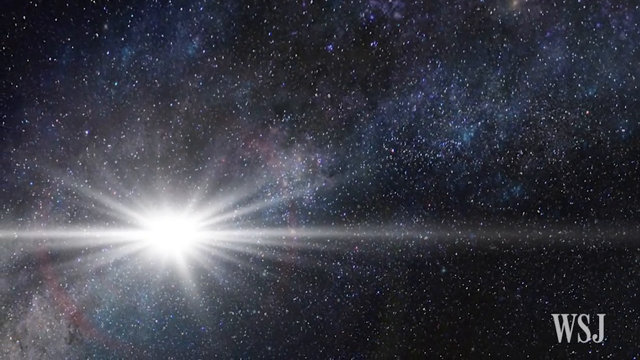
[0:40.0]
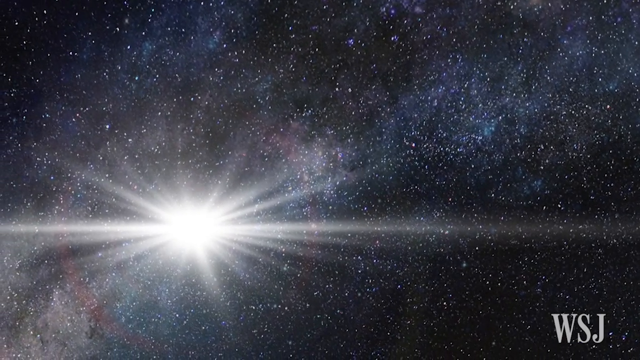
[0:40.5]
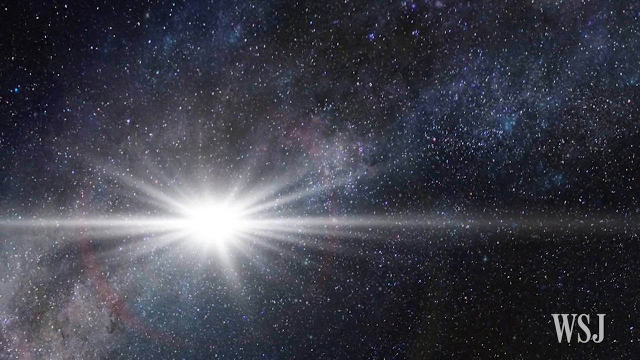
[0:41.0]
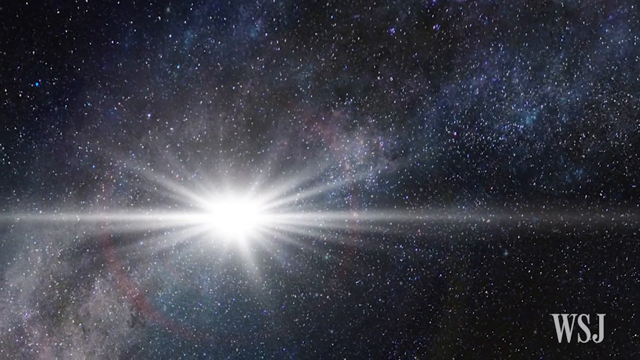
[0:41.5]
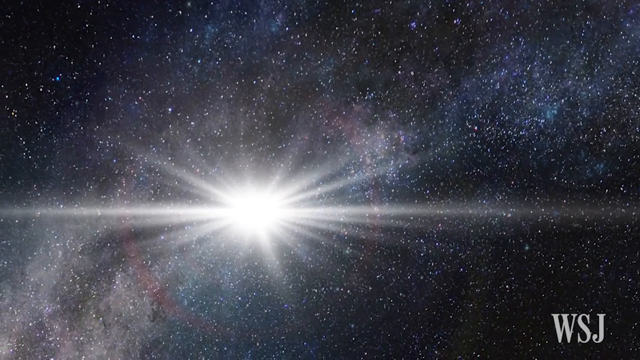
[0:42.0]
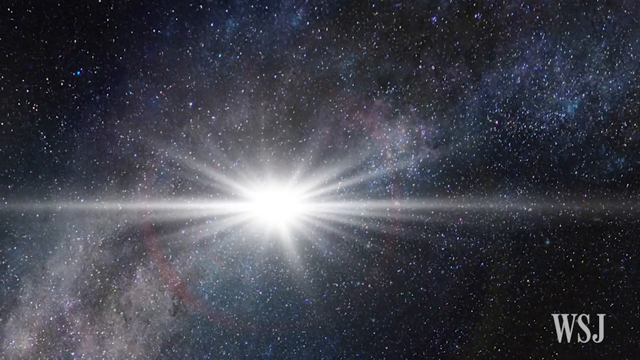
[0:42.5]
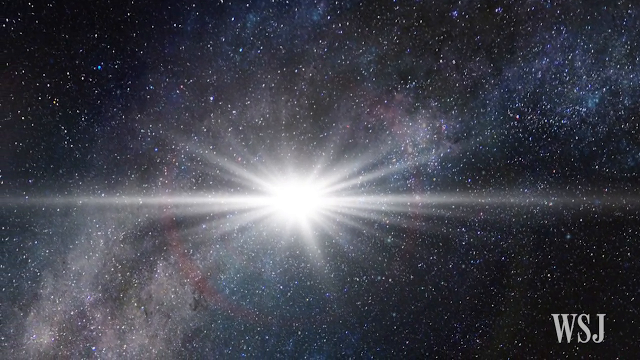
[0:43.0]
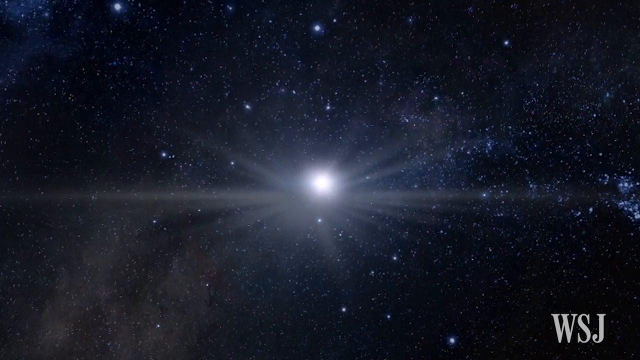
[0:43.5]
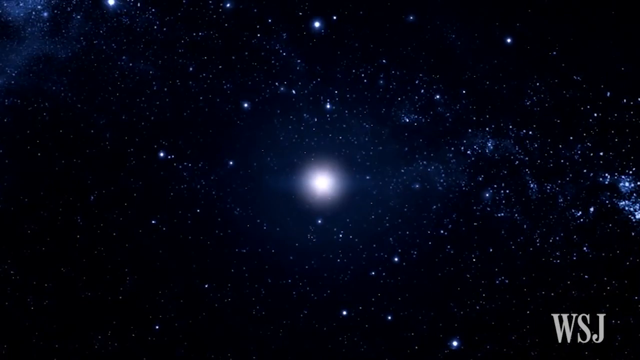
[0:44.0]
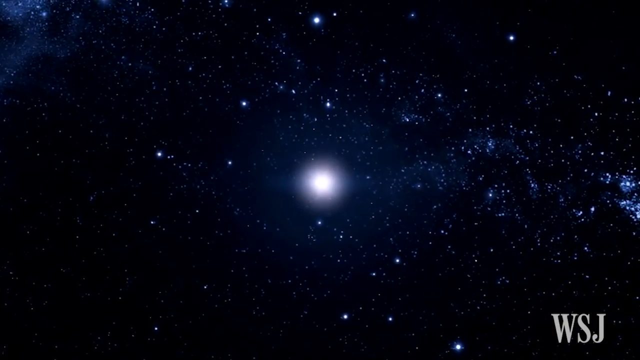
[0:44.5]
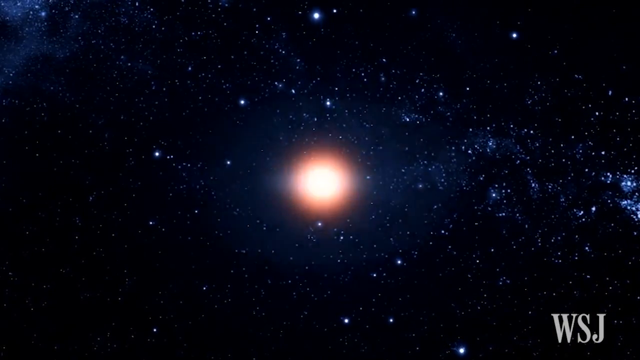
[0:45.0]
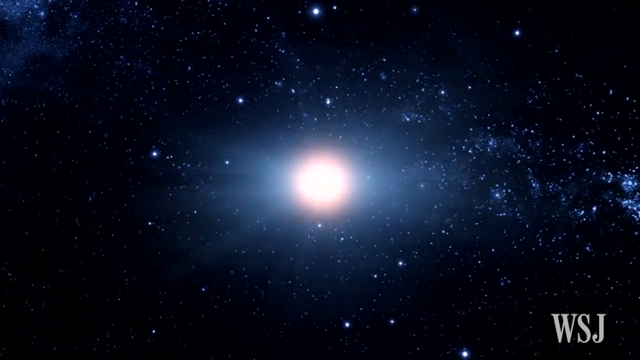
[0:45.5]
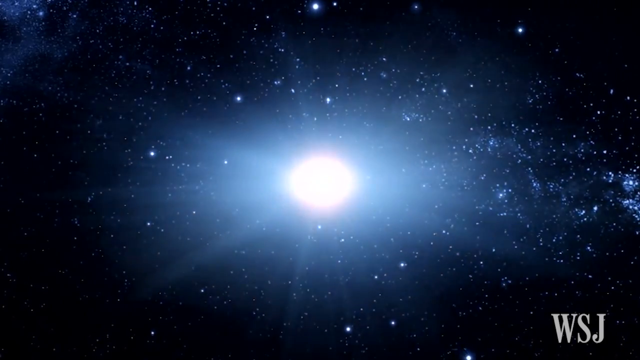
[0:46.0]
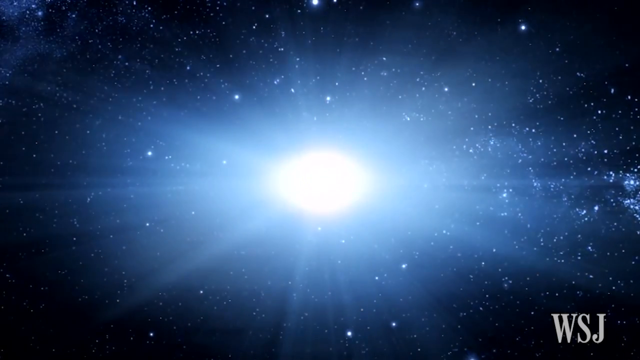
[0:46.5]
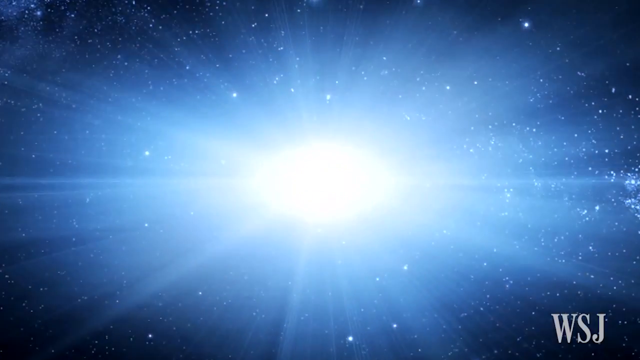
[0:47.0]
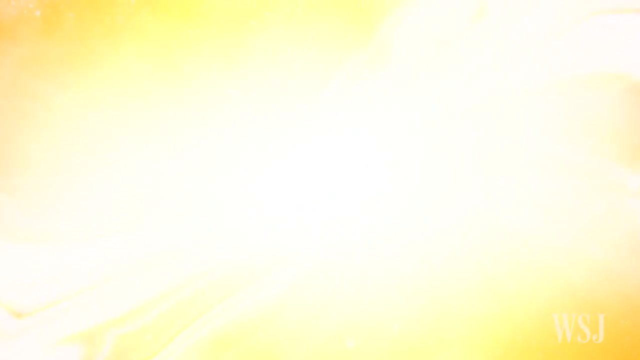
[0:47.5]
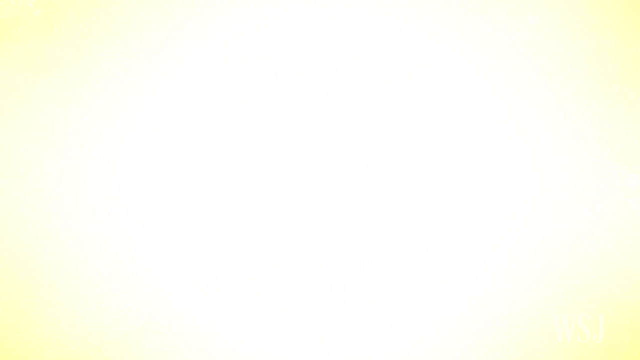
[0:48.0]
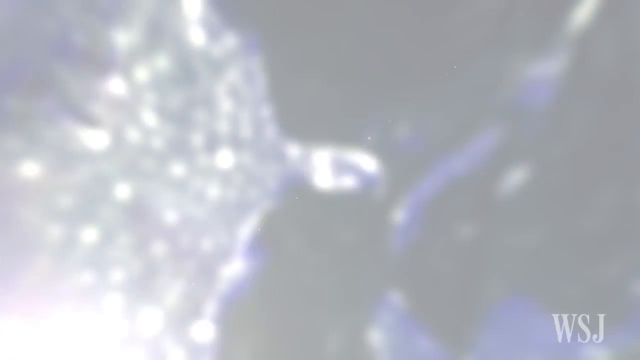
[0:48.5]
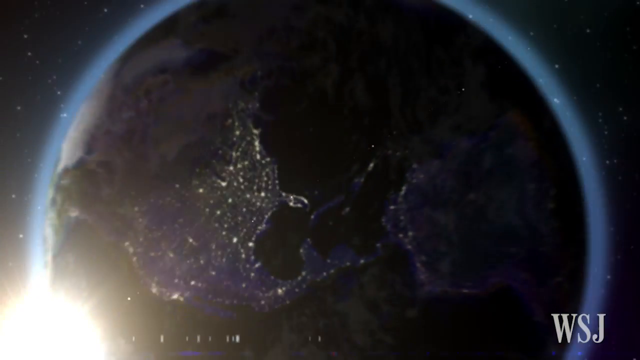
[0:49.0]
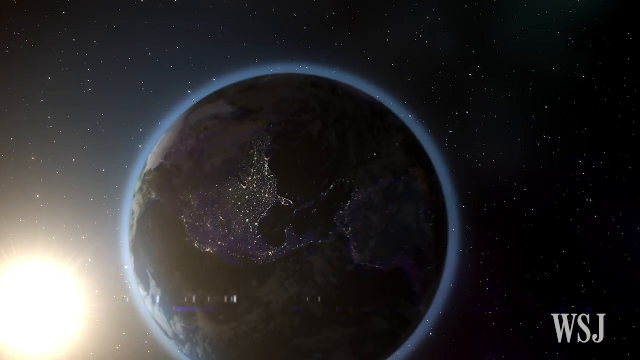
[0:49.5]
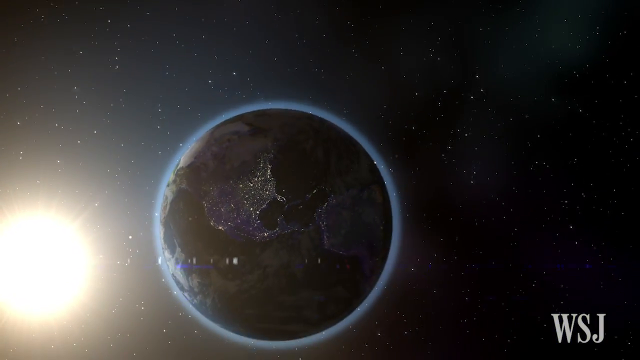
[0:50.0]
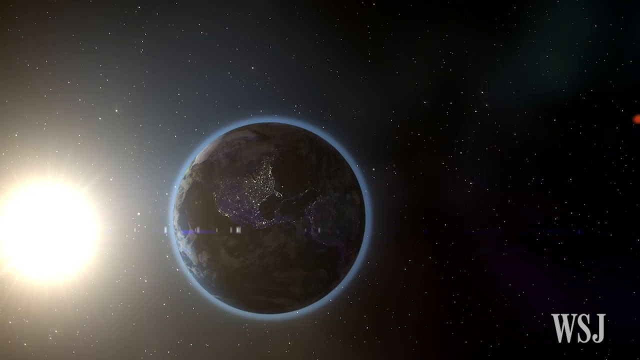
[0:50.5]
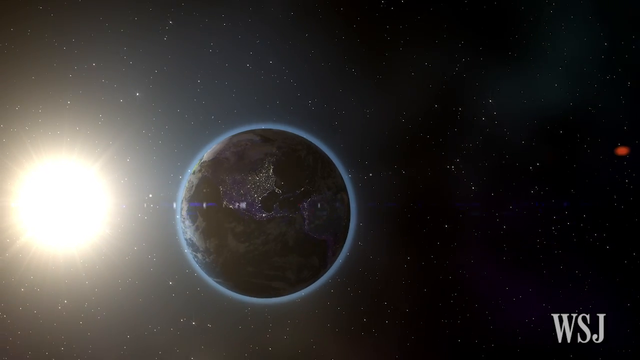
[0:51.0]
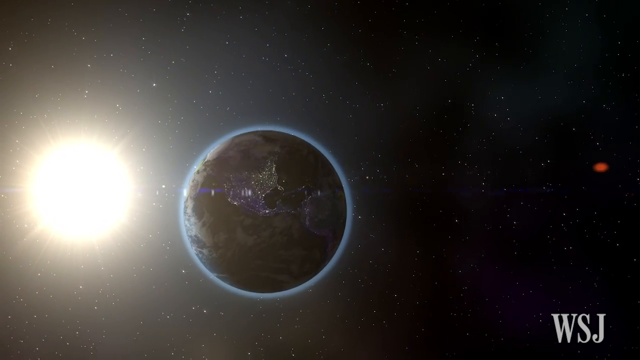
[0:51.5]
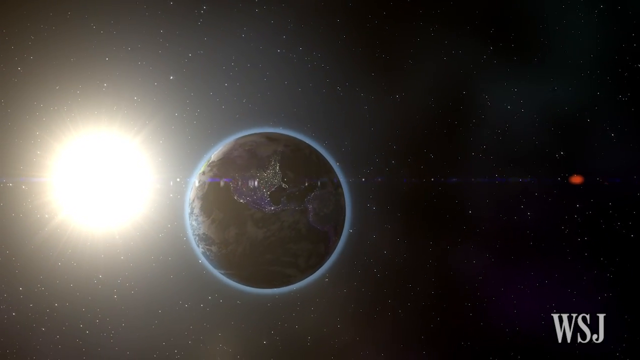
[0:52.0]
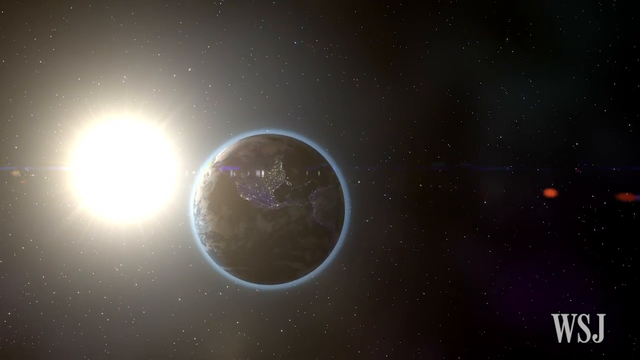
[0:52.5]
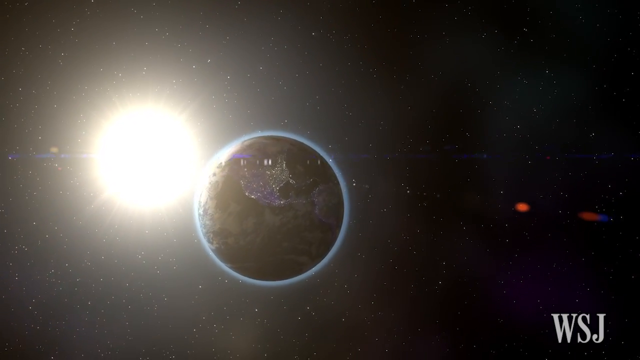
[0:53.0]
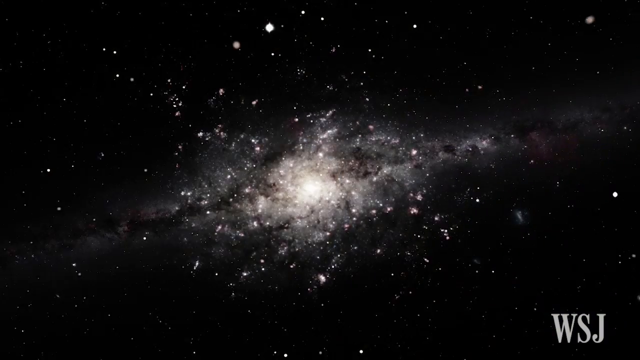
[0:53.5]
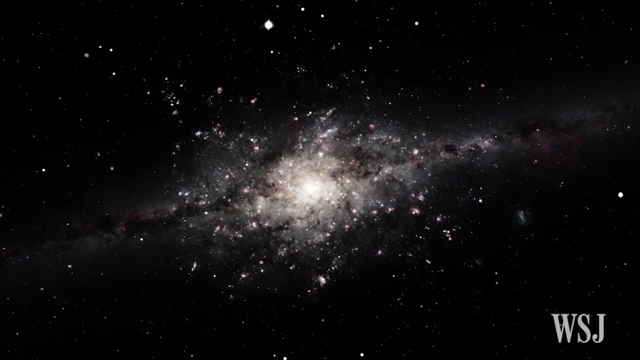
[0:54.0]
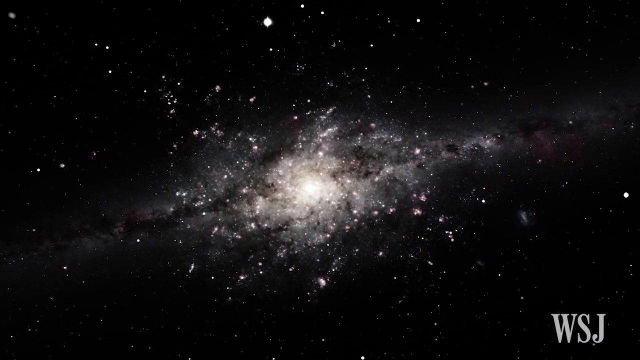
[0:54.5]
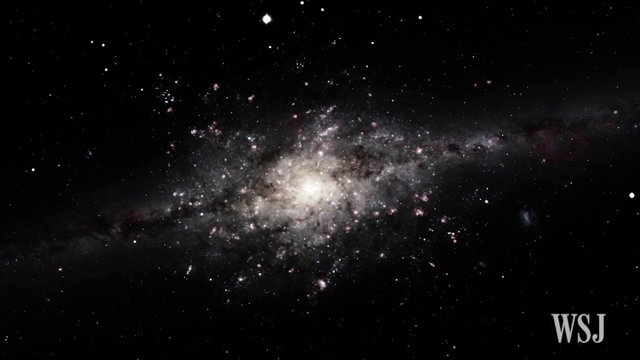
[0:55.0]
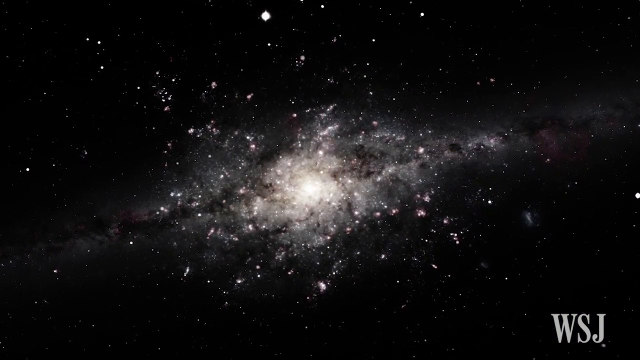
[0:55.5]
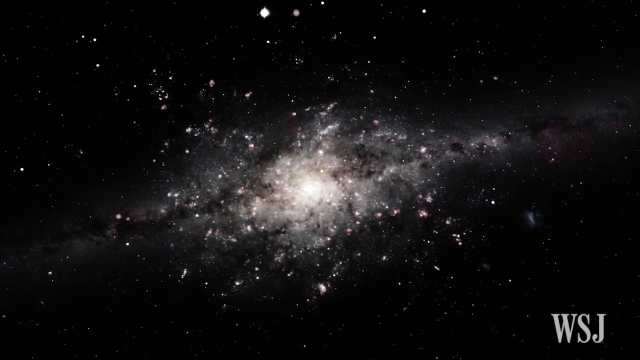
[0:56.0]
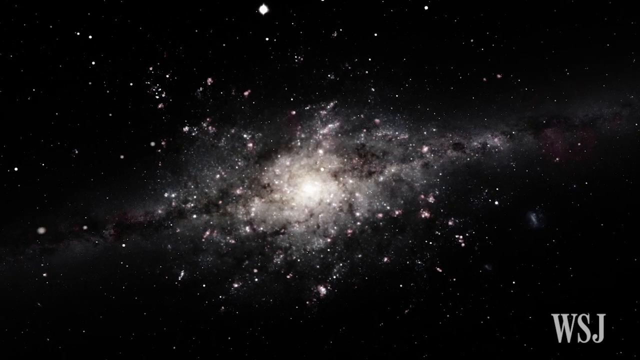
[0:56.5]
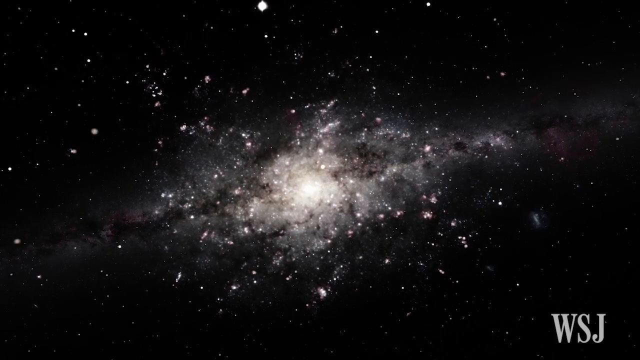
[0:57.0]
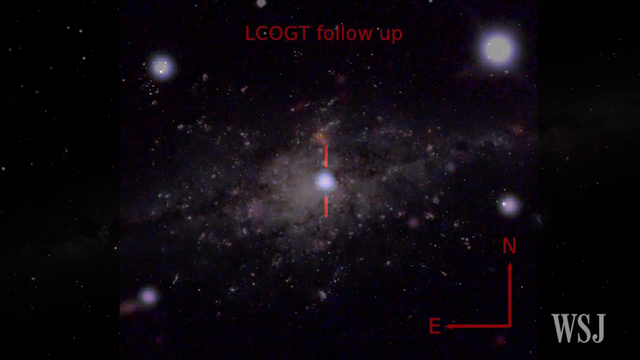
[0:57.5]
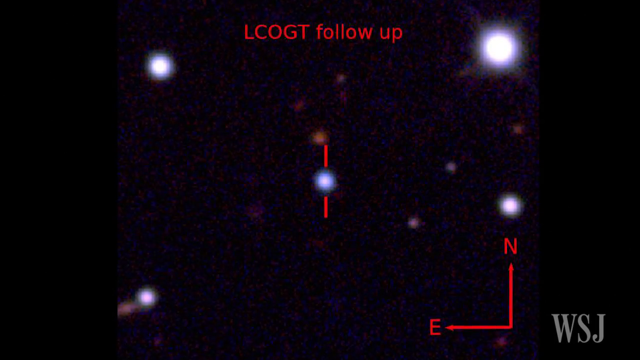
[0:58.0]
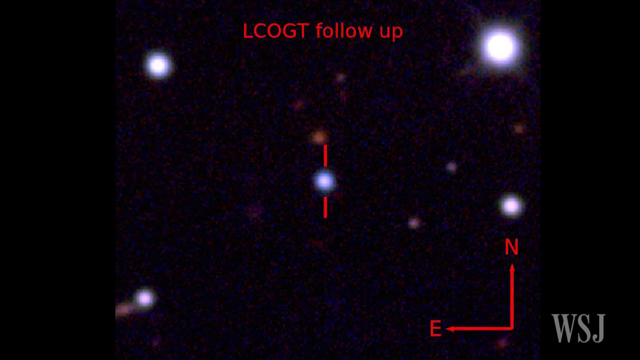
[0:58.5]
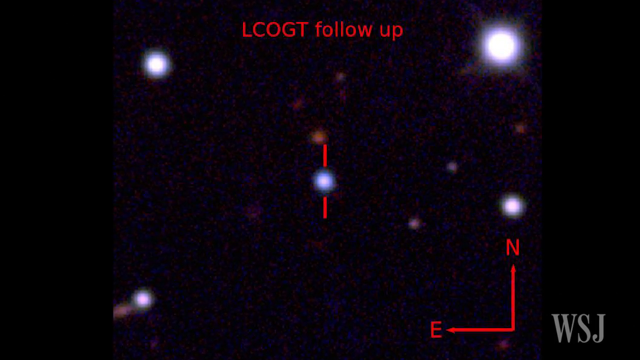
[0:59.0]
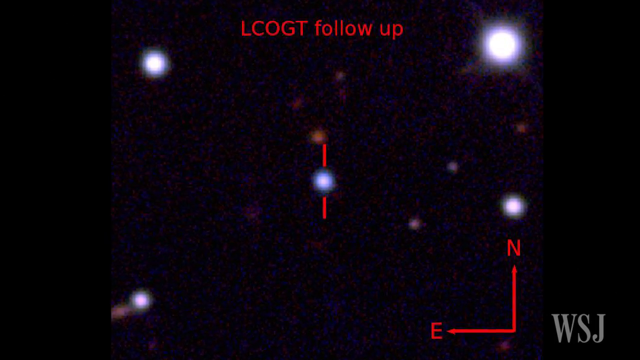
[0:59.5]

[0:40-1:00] In outer space, the view moves slowly across the screen from right to left, with a single star in the foreground and thousands behind it. It moves towards another star that is bright and blue and grows ever brighter, apparently heading straight towards it, and then a planet appears. The view goes back out into outer space, and a planet with a sun close by is shown, looking very much like Earth. Then a measuring device appears with the text "LCOGT follow up"; it points northwards, or up, and eastwards, which here is to the left rather than the right.